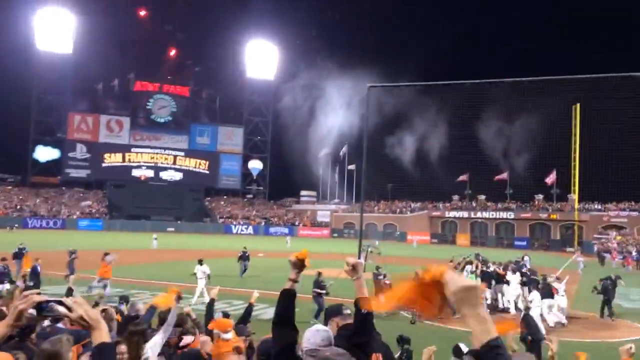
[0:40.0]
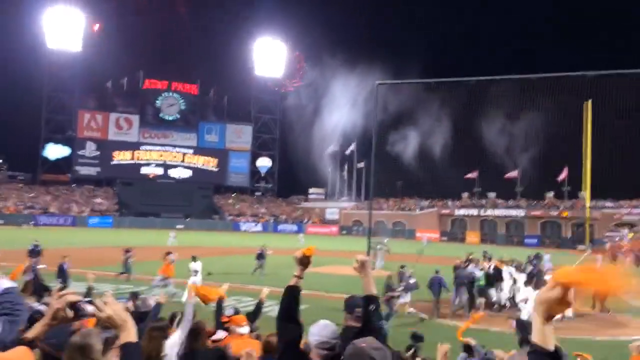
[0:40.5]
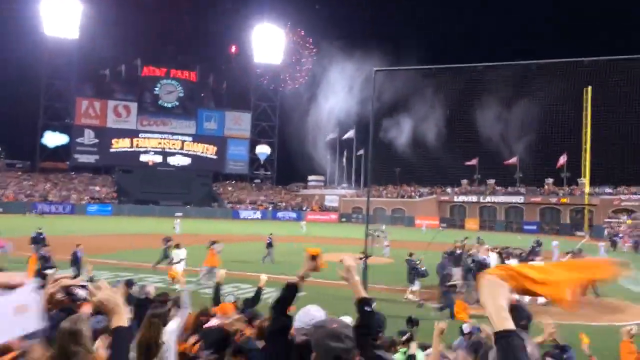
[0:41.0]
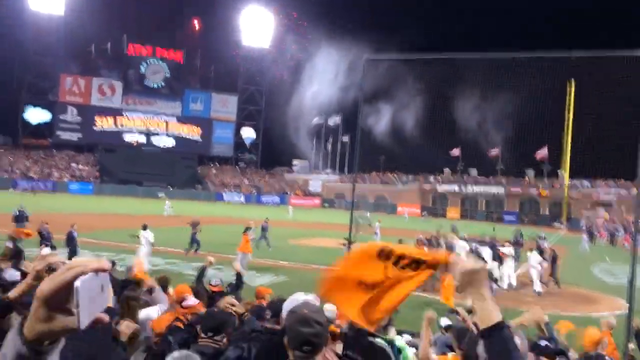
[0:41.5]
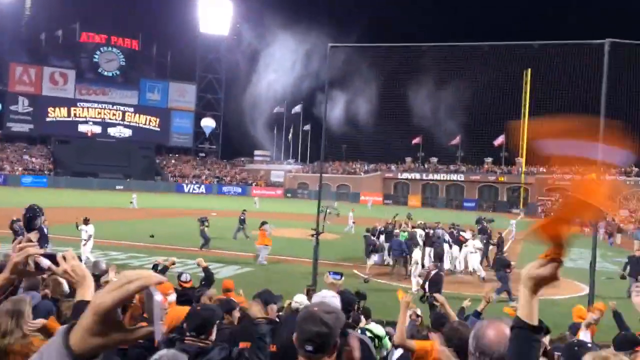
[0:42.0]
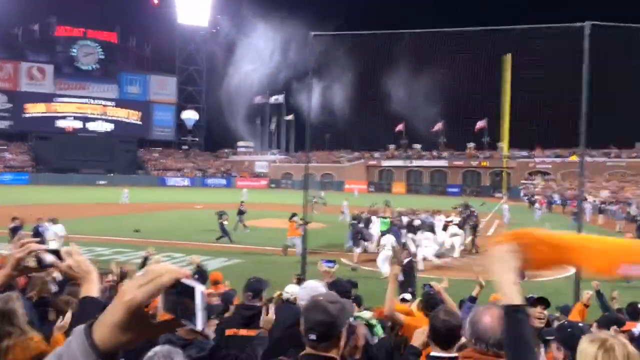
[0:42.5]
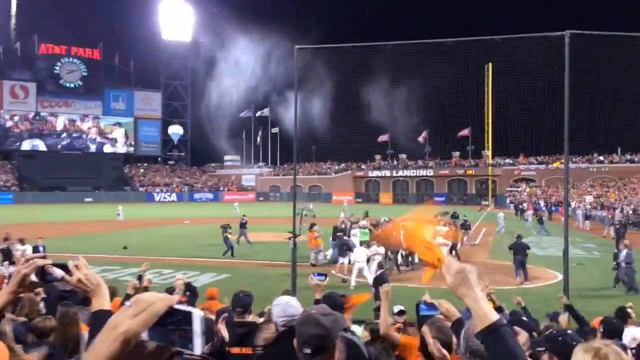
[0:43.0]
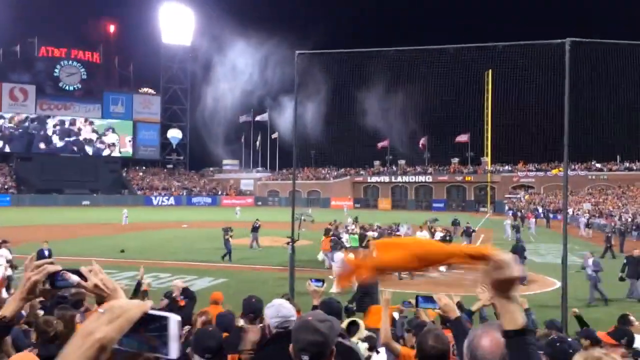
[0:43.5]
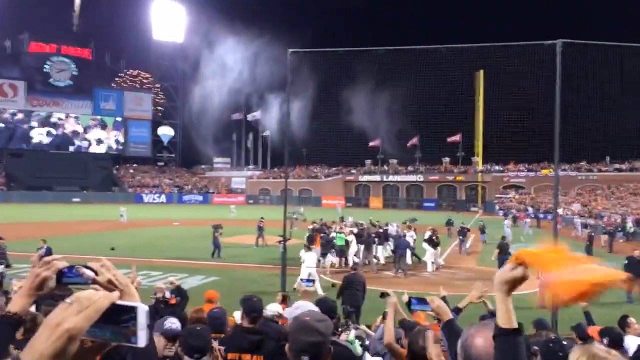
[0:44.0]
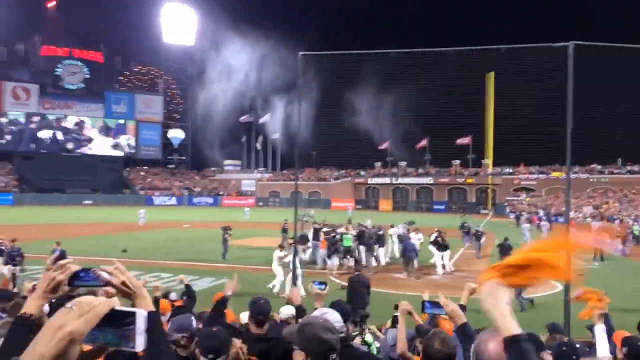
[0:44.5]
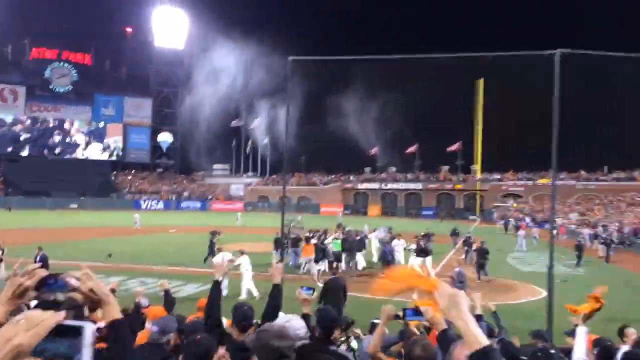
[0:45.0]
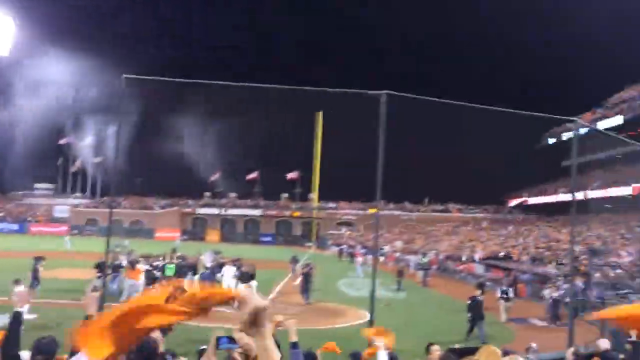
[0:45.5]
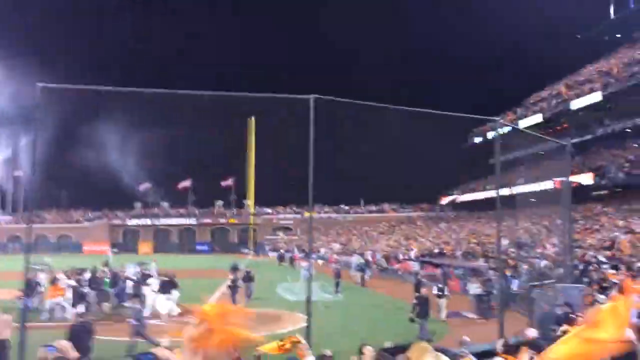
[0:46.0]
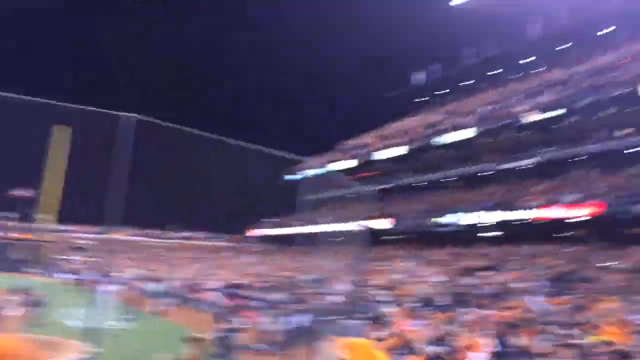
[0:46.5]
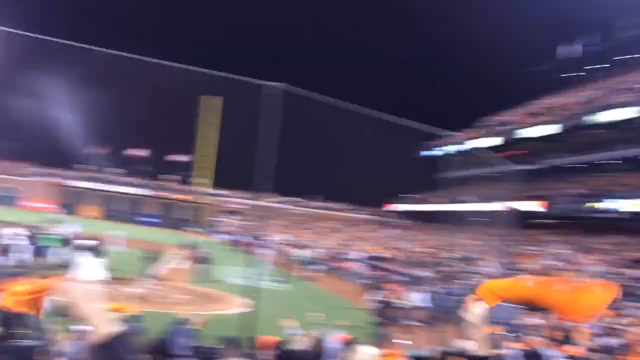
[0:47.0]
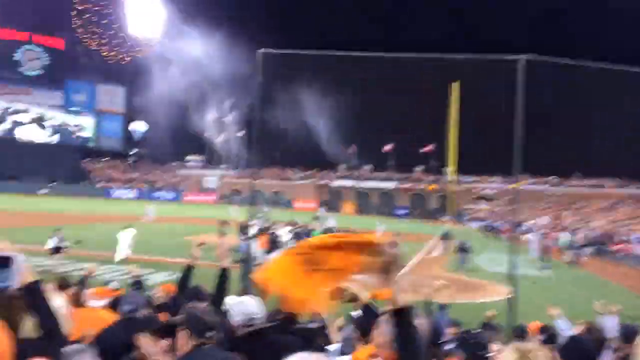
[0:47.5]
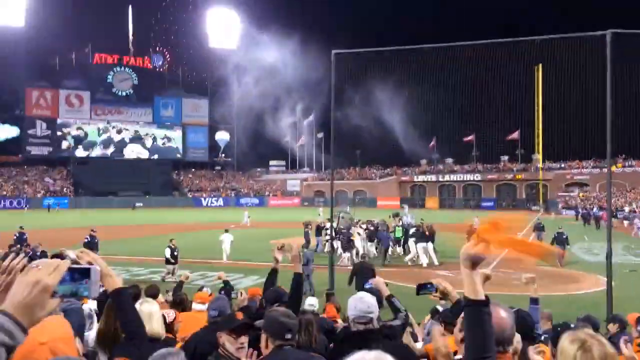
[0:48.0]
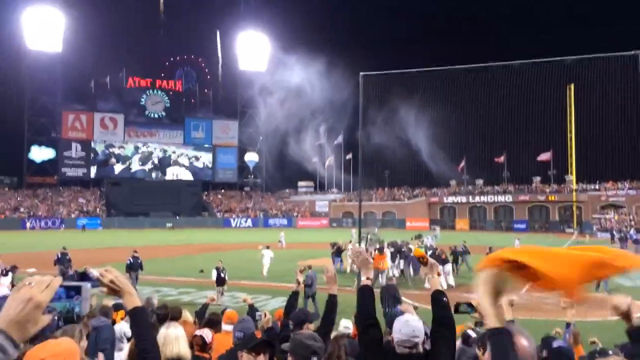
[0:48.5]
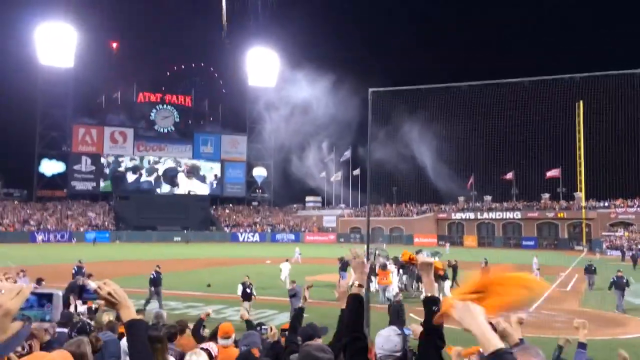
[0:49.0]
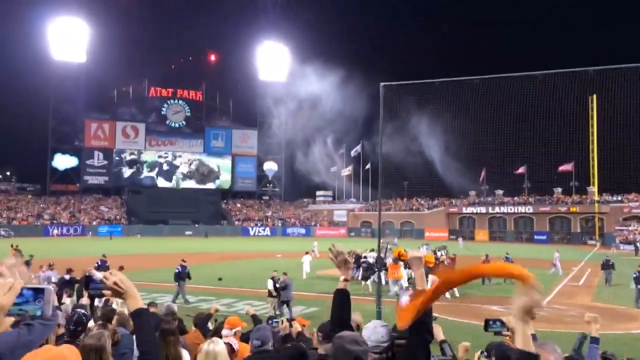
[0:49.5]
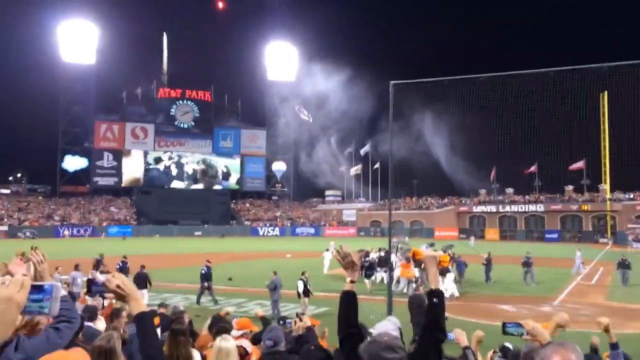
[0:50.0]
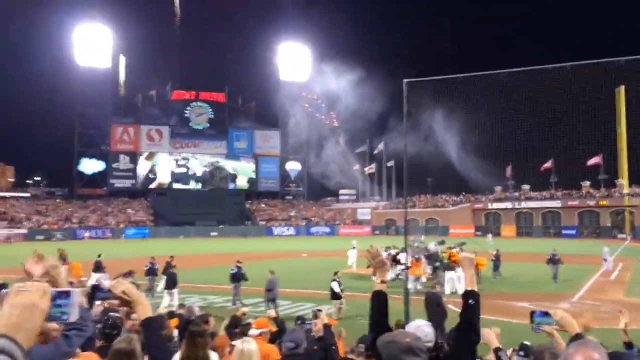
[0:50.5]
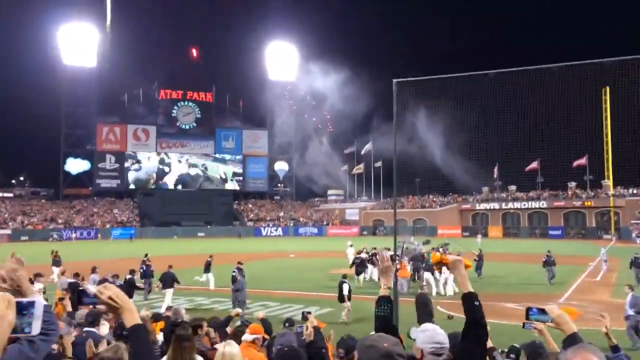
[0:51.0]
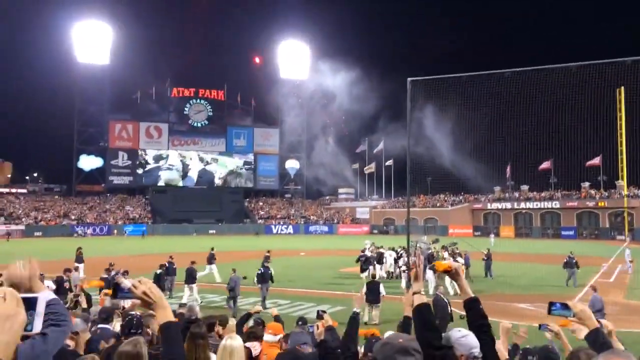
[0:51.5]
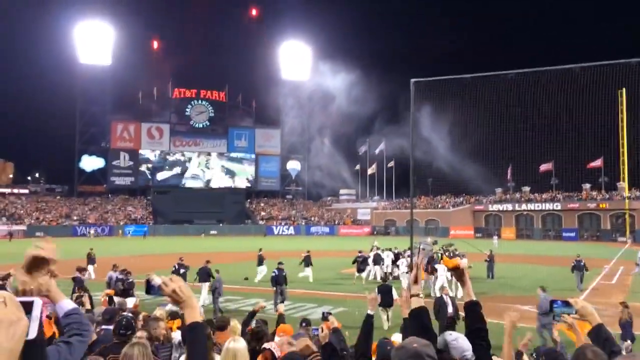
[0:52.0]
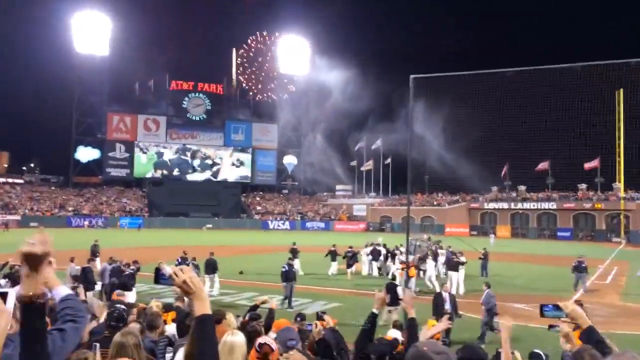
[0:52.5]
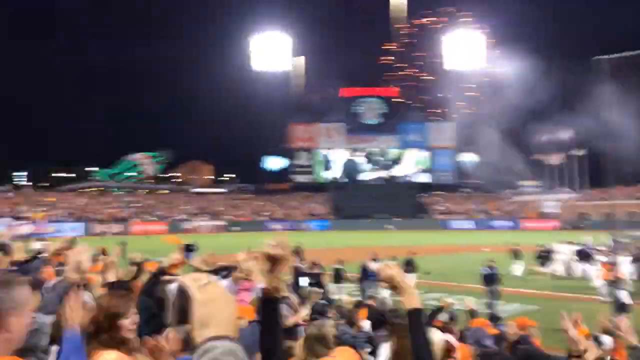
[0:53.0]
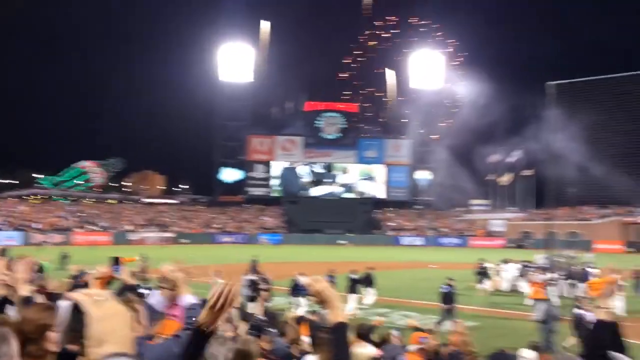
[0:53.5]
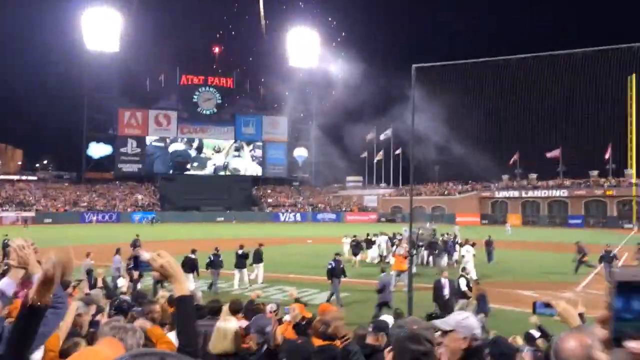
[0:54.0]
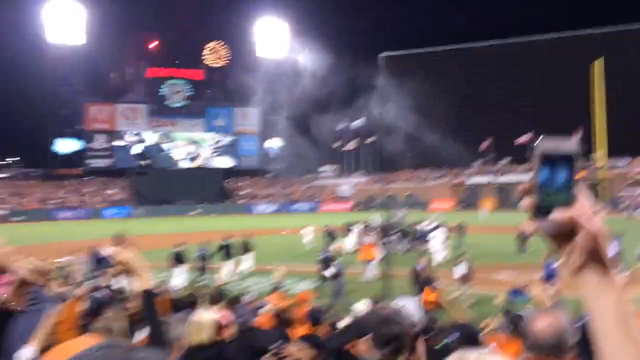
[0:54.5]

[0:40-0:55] The team continues supporting each other and jumping around. Fans cheer, clap, and throw their fists in the air, and a few people twirl orange shirts or towels. The person recording is a fan in the stands, who veers to the right and then to the left to show the fans, apparently showing the entire stadium celebrating. Someone else in the video is also recording, and another person has their phone out. The sign says "congratulations San Francisco Giants".